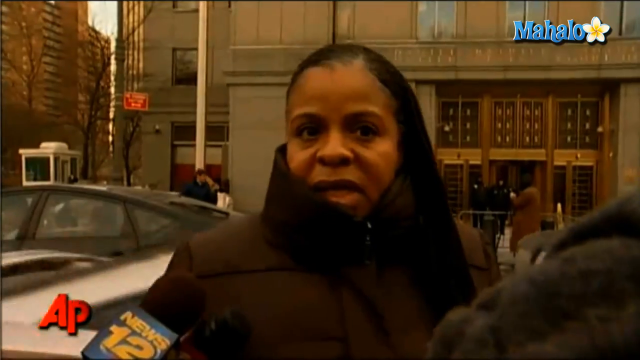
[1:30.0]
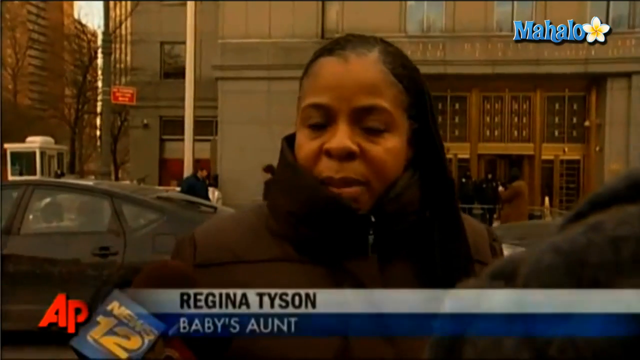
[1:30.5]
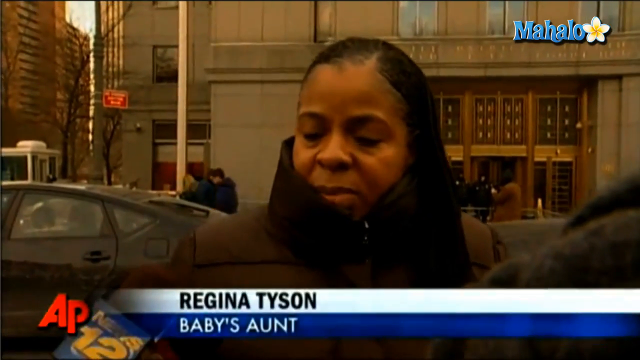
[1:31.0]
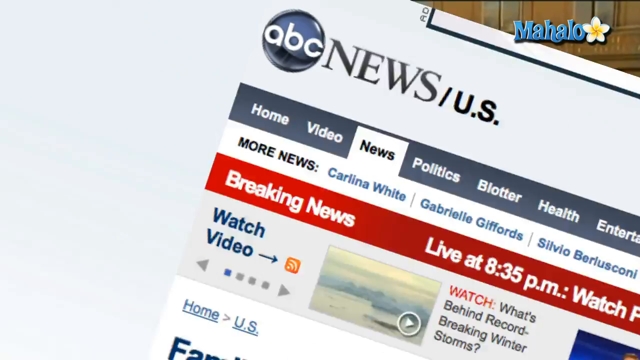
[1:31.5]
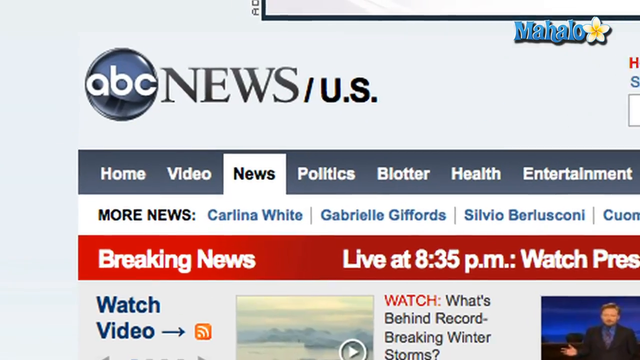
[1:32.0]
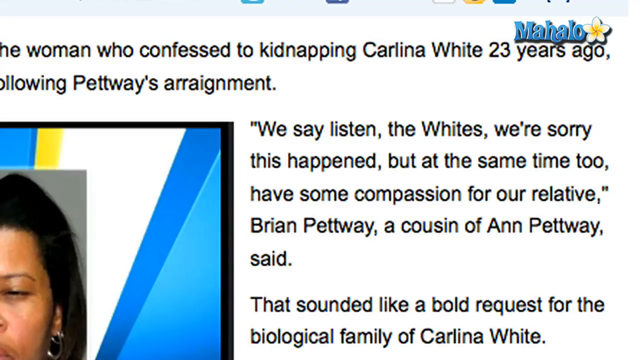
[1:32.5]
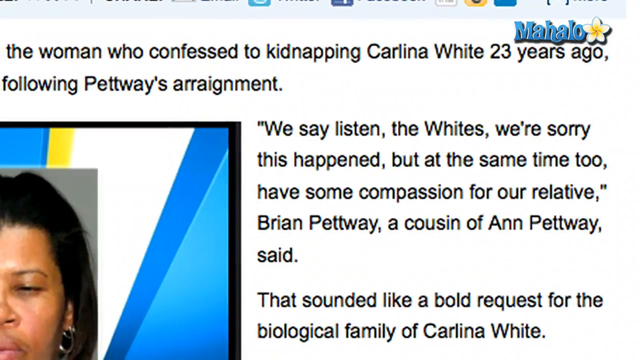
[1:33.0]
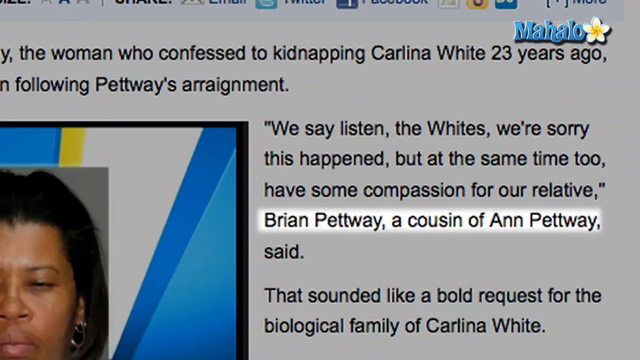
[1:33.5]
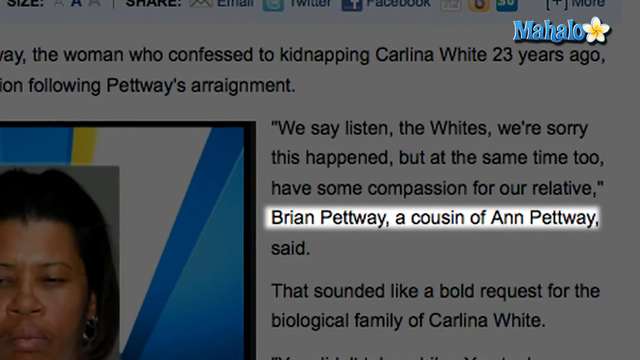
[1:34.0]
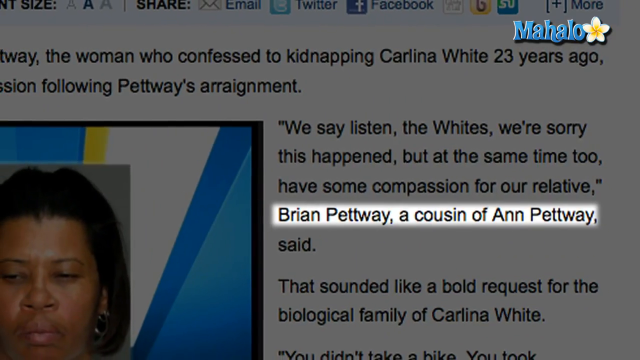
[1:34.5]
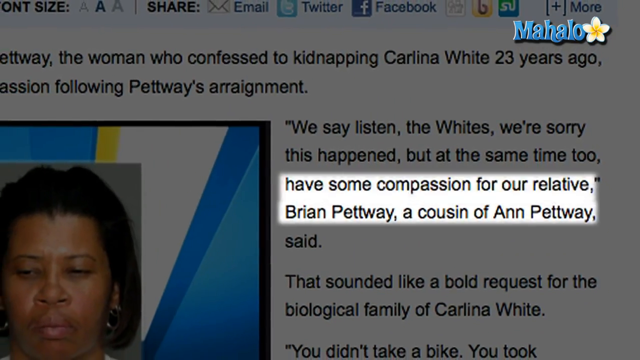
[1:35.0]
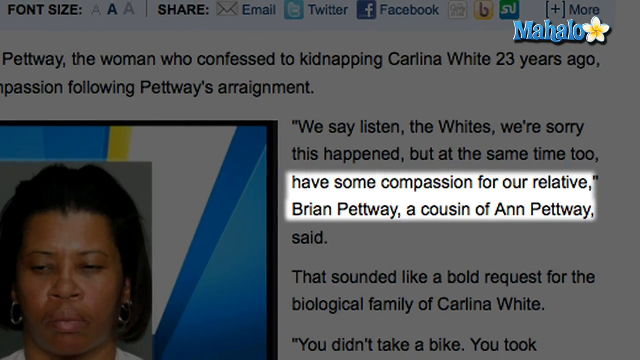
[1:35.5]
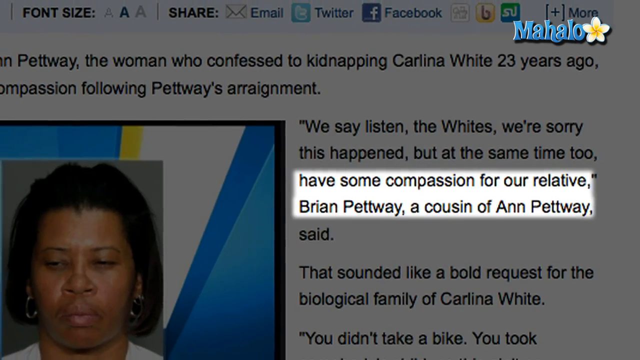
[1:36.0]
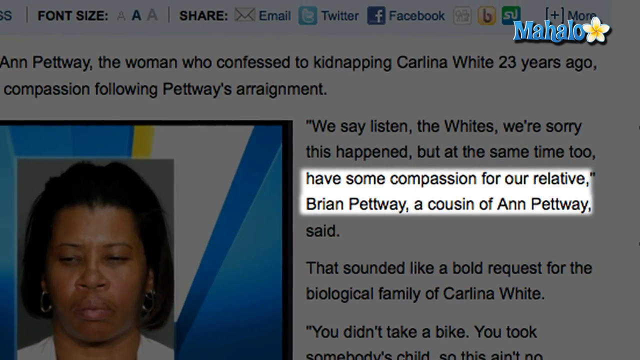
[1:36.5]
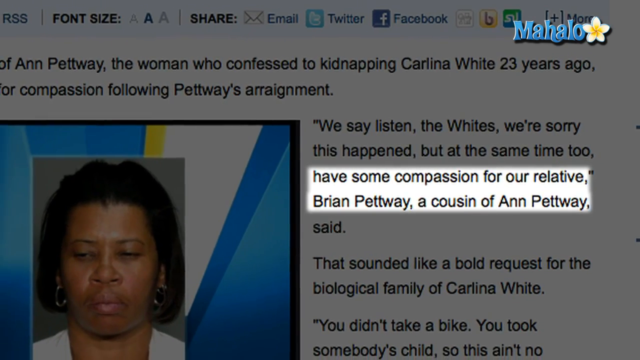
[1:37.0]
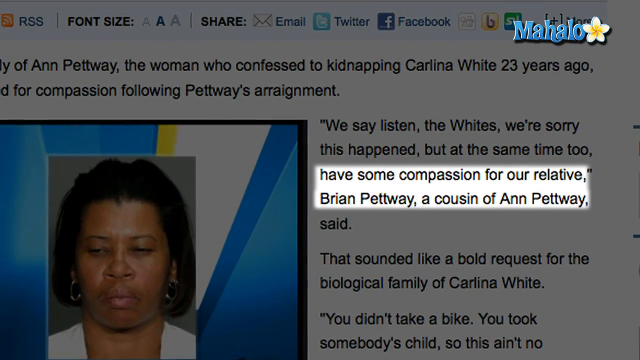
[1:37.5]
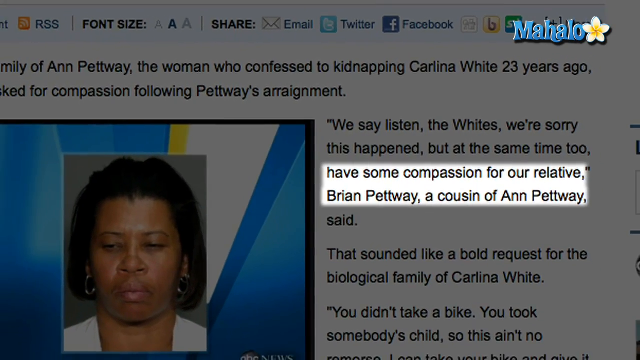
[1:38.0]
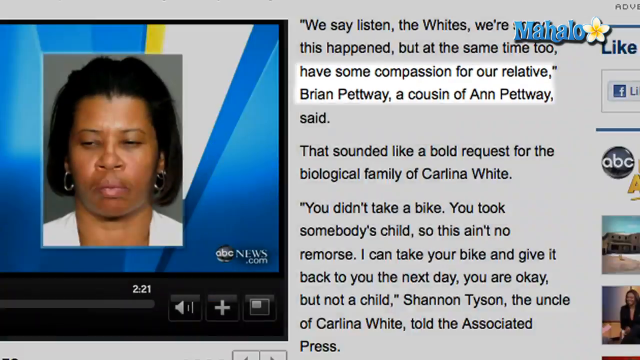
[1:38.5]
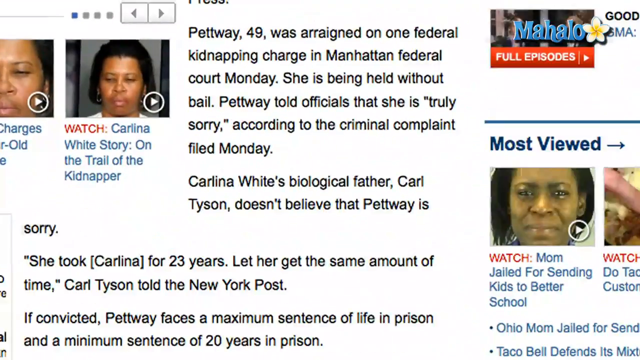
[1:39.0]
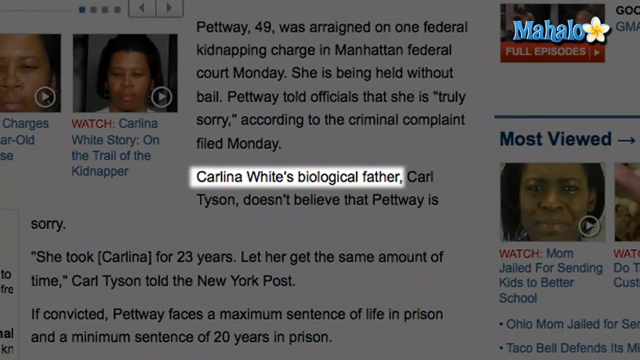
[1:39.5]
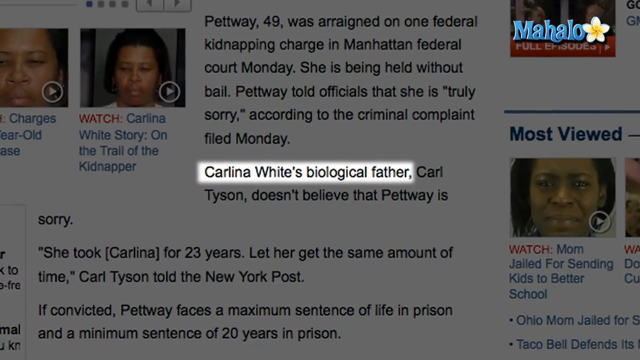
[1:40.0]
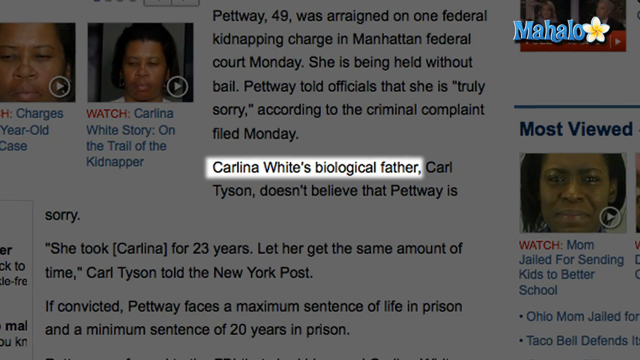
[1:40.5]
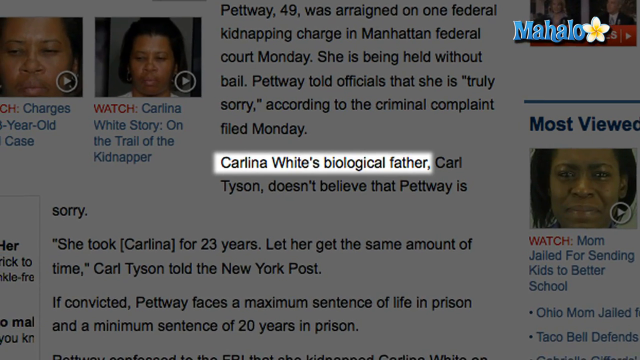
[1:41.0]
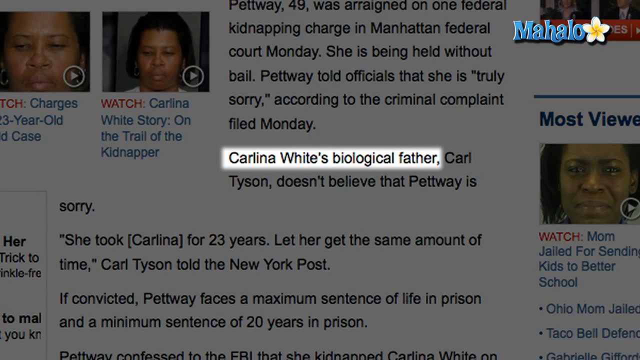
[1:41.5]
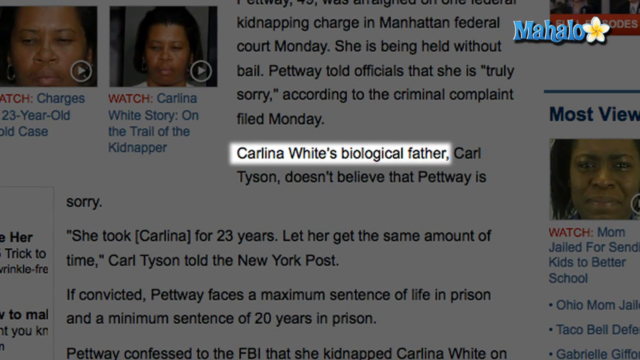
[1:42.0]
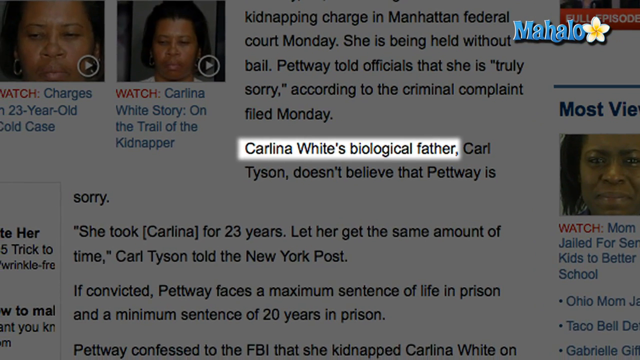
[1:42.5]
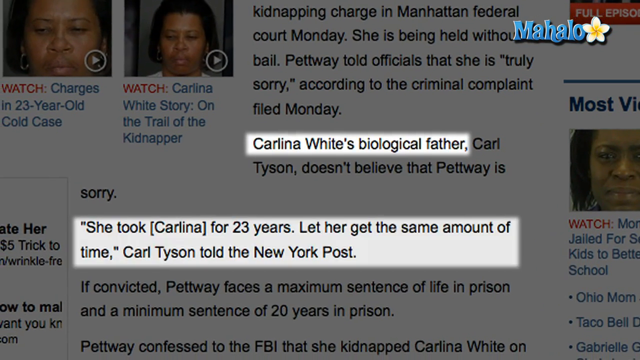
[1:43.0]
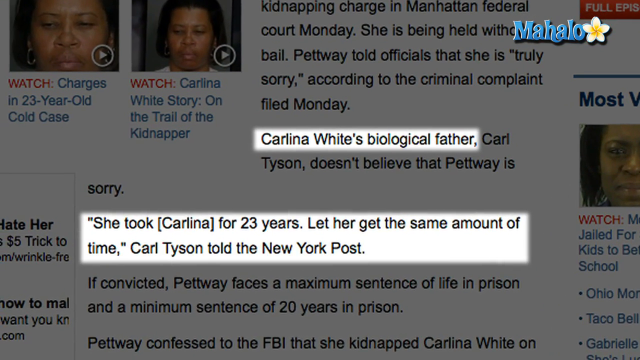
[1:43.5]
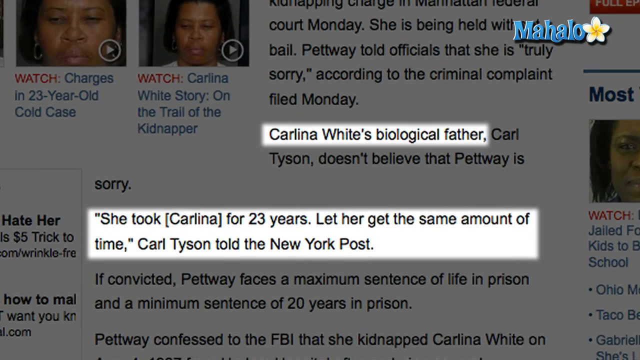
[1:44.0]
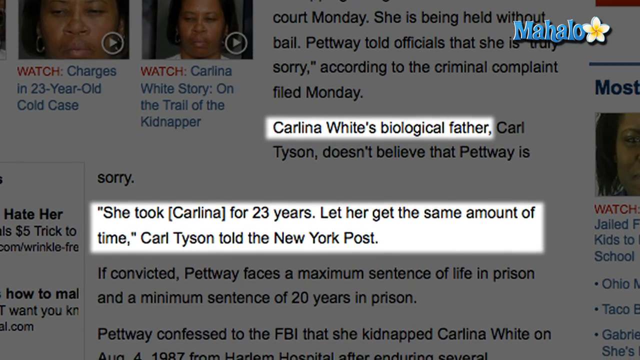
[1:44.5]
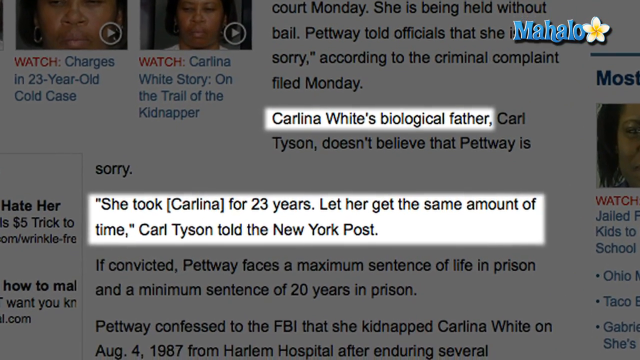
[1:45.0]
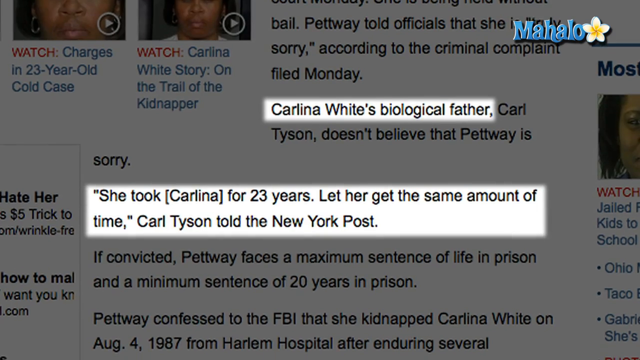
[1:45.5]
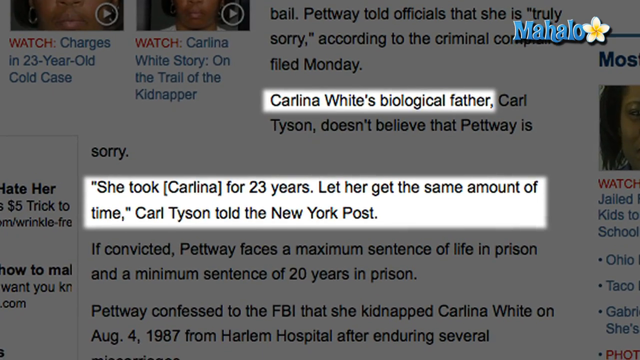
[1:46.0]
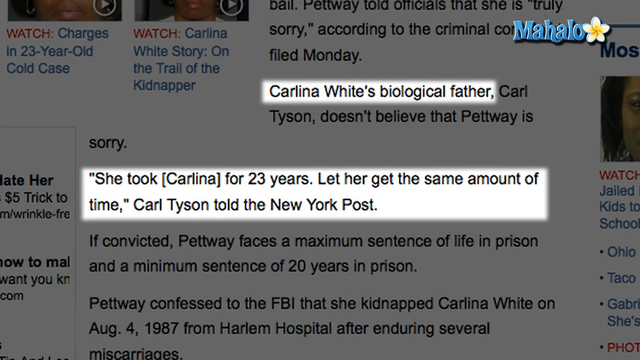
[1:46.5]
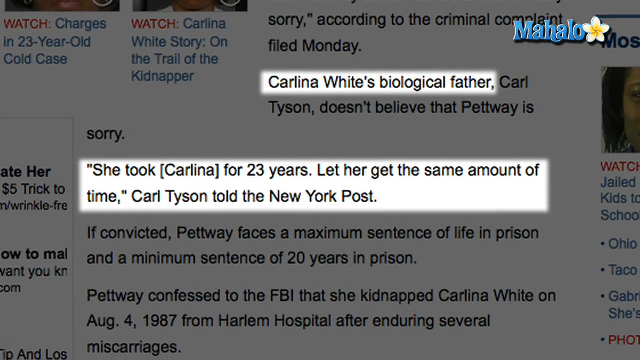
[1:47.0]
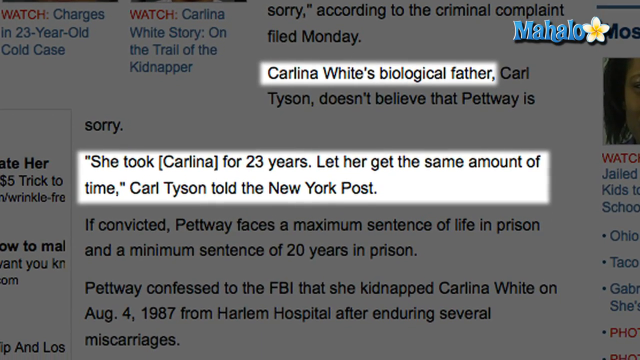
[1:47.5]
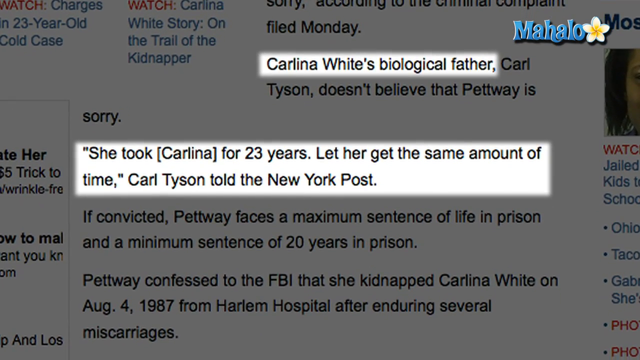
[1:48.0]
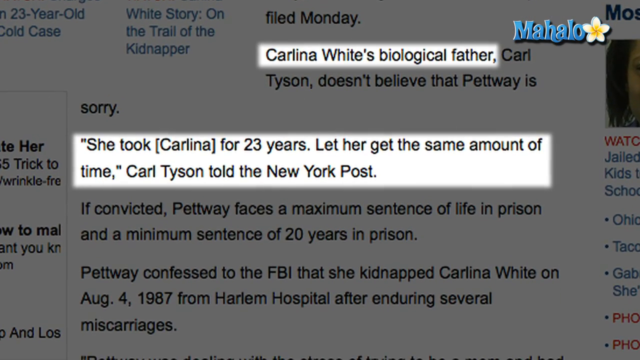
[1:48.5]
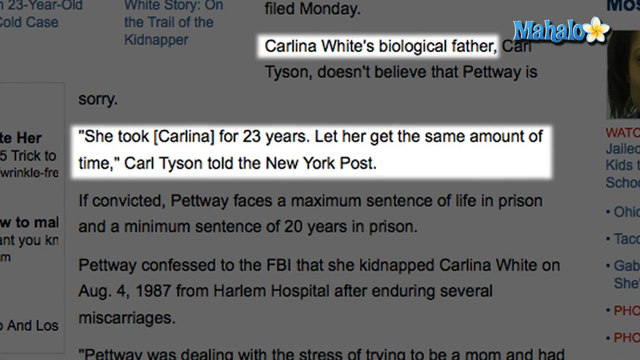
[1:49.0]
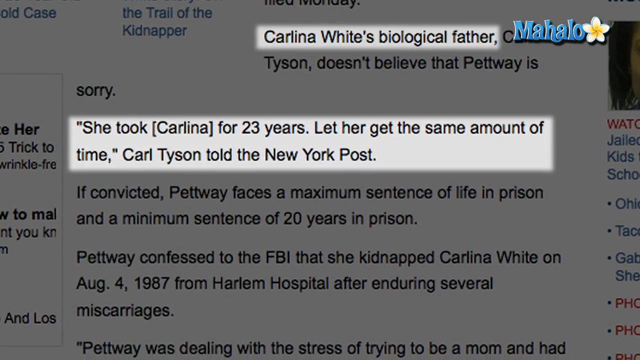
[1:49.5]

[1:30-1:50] An interview with a woman on what looks to be a sidewalk in a city is shown, with text below reading "Regina Tyson, baby's aunt". The scene quickly shifts to a screenshot of an ABC News article where the highlighted text reads "have some compassion for our relative, Brian Pettway, a cousin of Anne Pettway, said". The camera then zooms down farther on the article, and the highlighted text reads "Carlina White's biological father". Below that, in the next paragraph, a highlighted quote reads "She took [Carlina] for 23 years. Let her get the same amount of time," Carl Tyson told the New York Post. The camera remains on that area for a while, supposedly to let viewers read the highlighted areas. The rest of the screen is shaded so that the two sections with white backgrounds stand out. The Mahalo logo is in the top right corner of the screen, with "Mahalo" in blue and a flower to the right of the word.